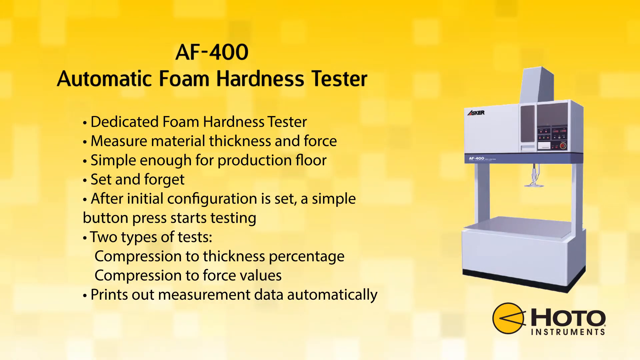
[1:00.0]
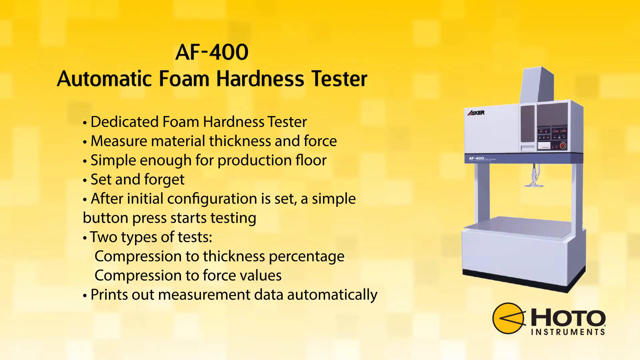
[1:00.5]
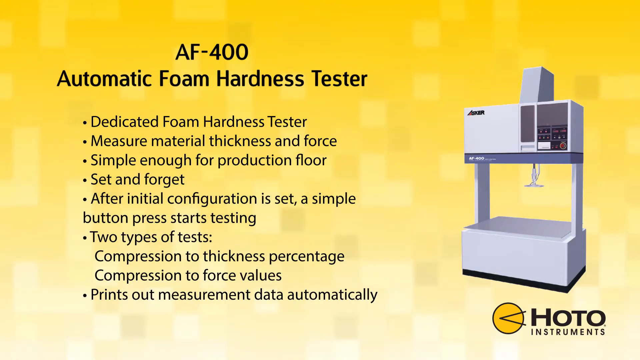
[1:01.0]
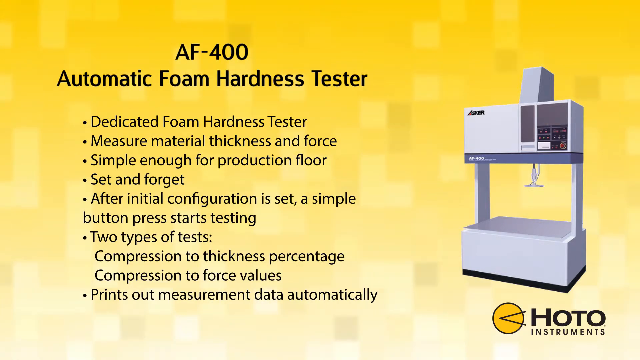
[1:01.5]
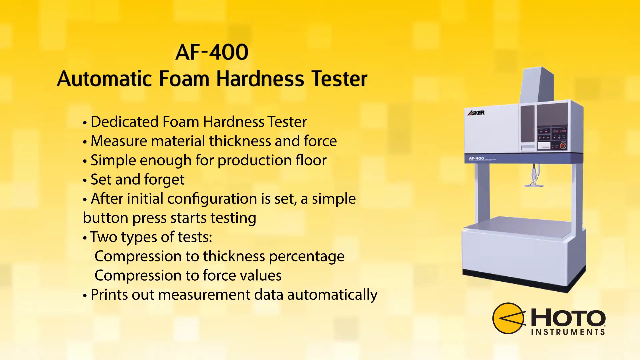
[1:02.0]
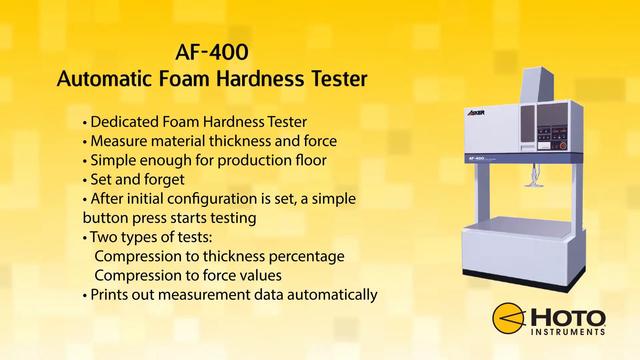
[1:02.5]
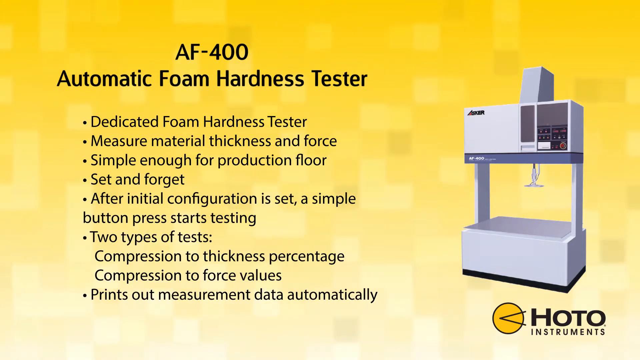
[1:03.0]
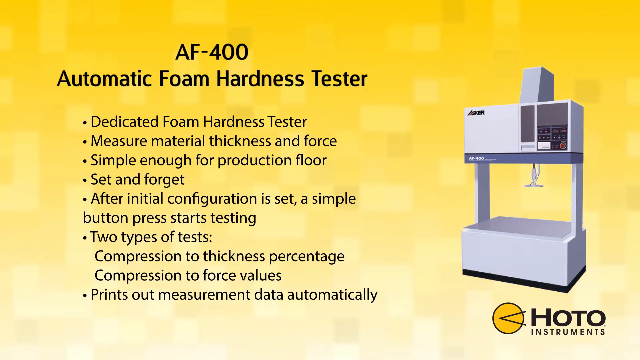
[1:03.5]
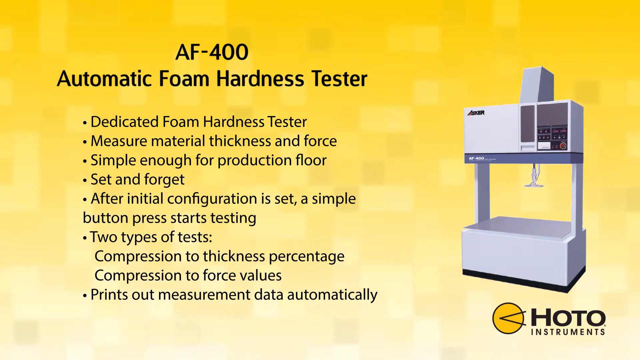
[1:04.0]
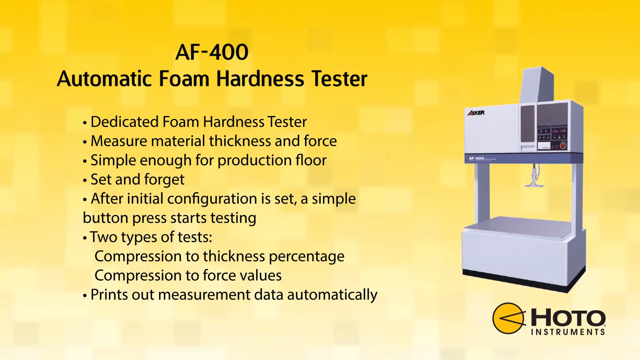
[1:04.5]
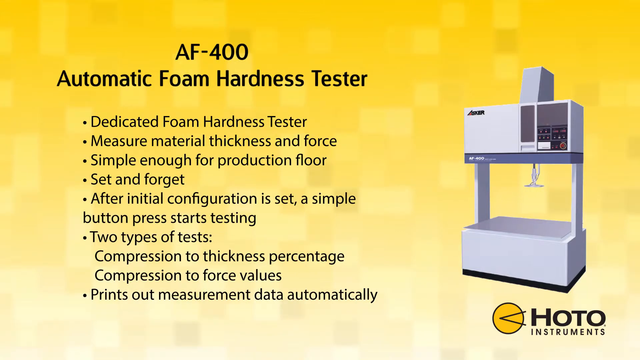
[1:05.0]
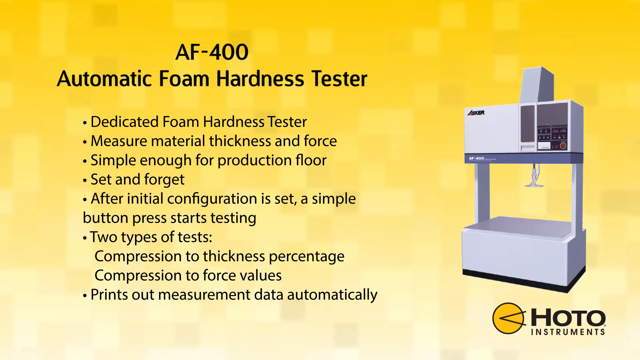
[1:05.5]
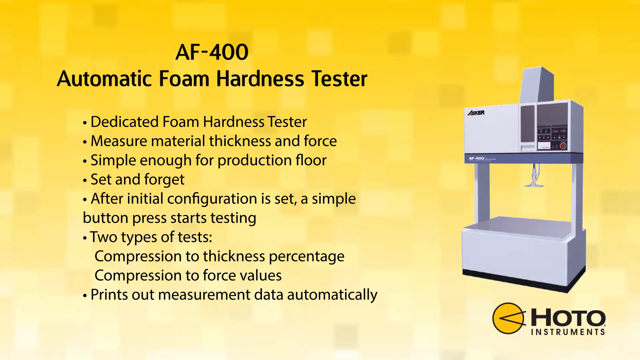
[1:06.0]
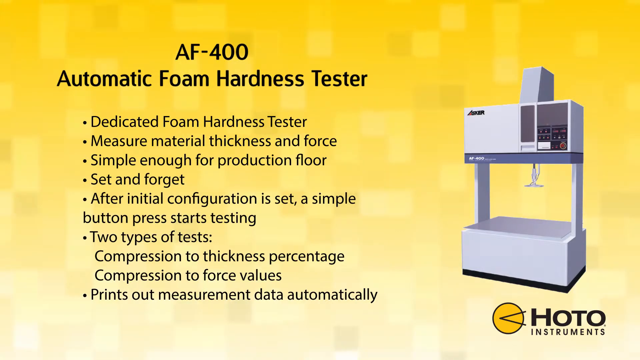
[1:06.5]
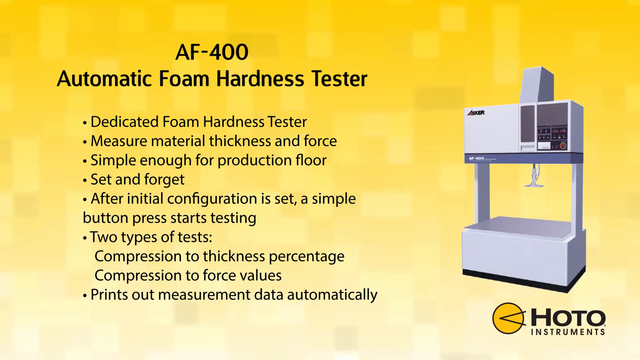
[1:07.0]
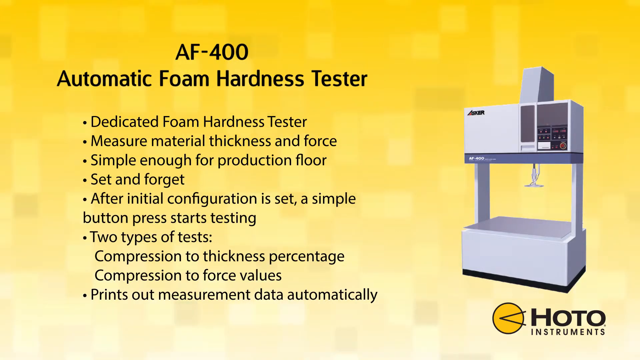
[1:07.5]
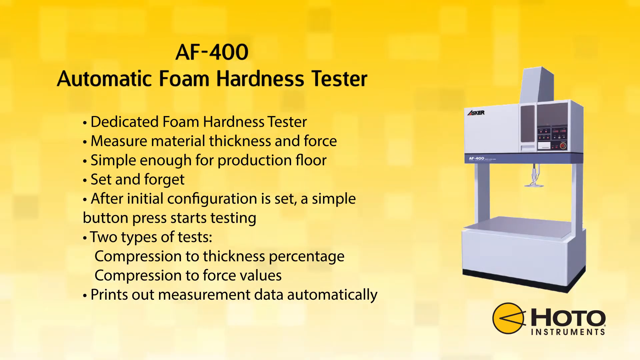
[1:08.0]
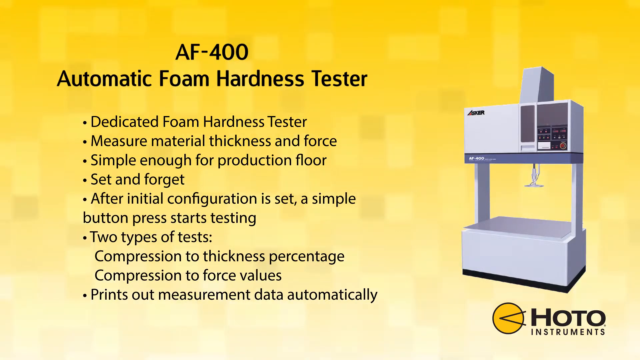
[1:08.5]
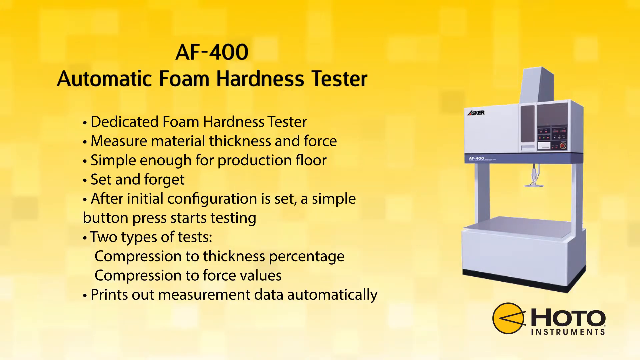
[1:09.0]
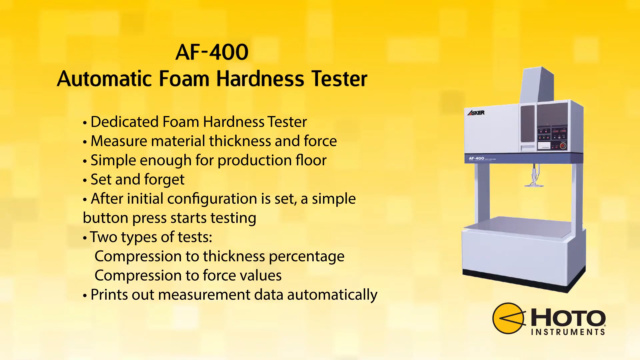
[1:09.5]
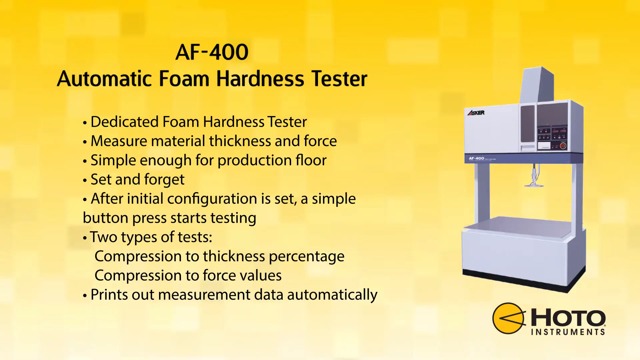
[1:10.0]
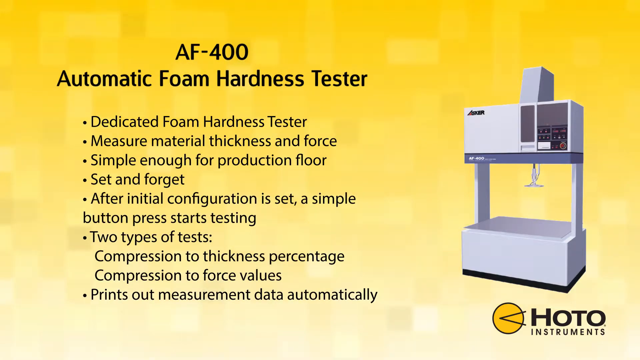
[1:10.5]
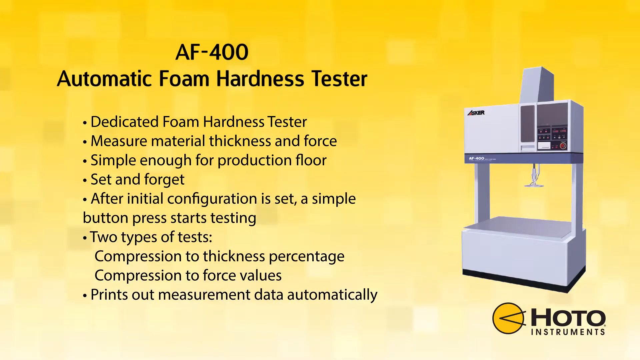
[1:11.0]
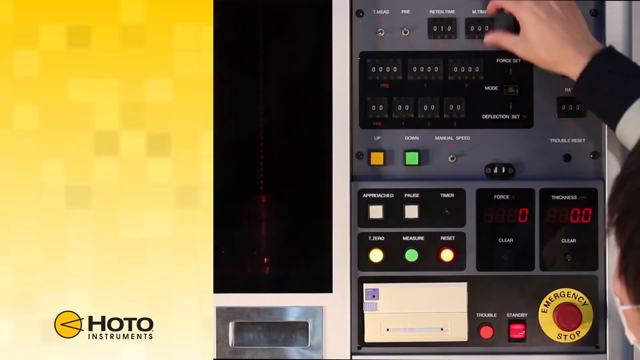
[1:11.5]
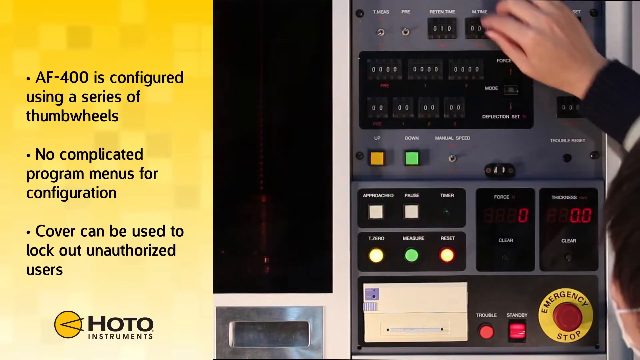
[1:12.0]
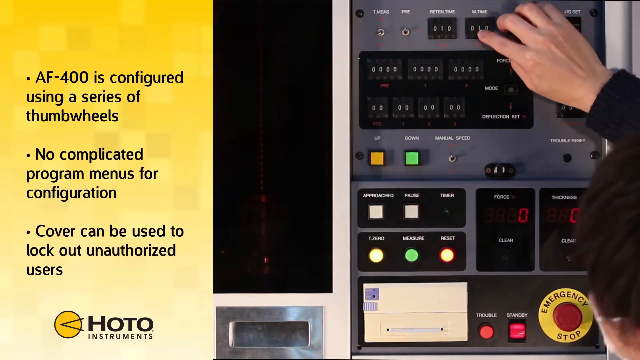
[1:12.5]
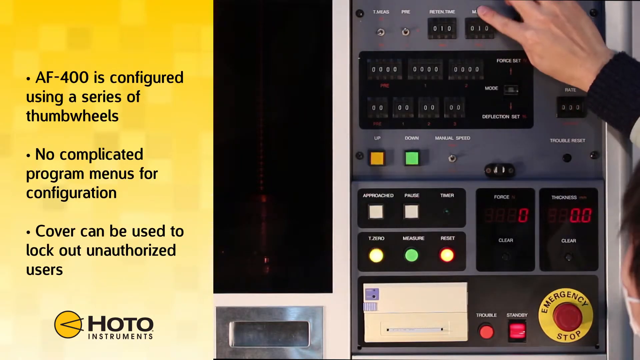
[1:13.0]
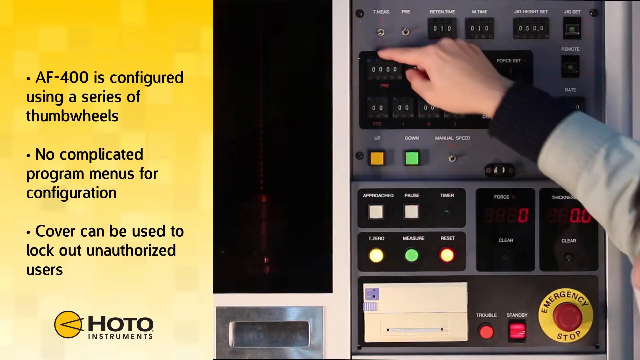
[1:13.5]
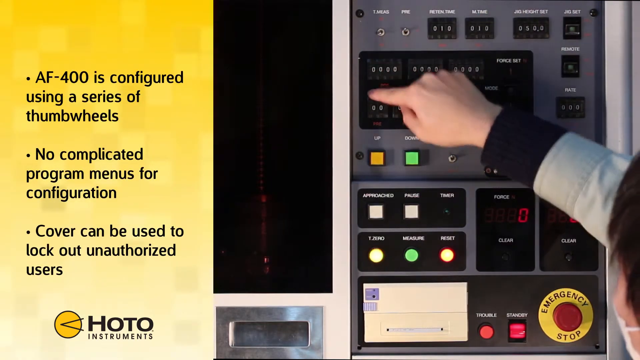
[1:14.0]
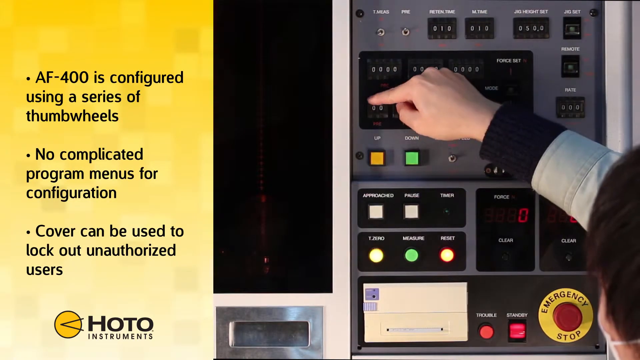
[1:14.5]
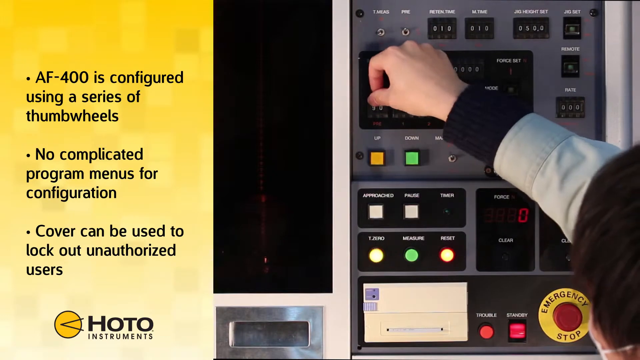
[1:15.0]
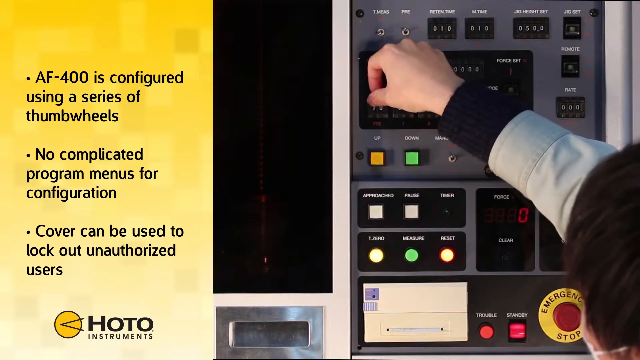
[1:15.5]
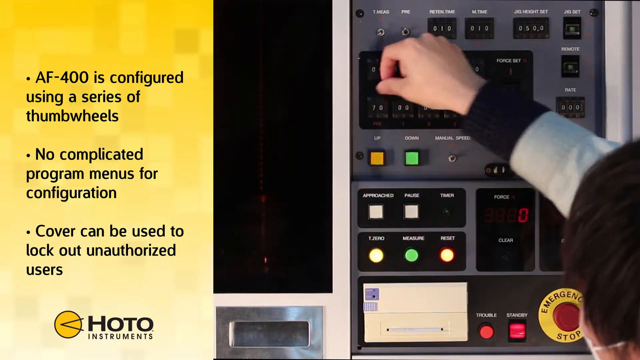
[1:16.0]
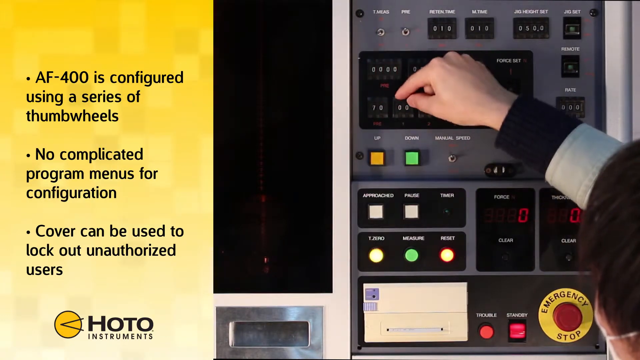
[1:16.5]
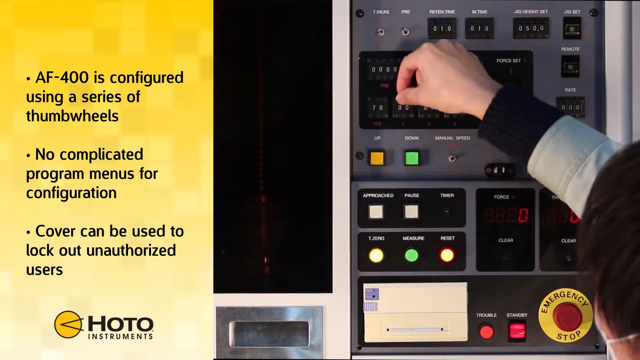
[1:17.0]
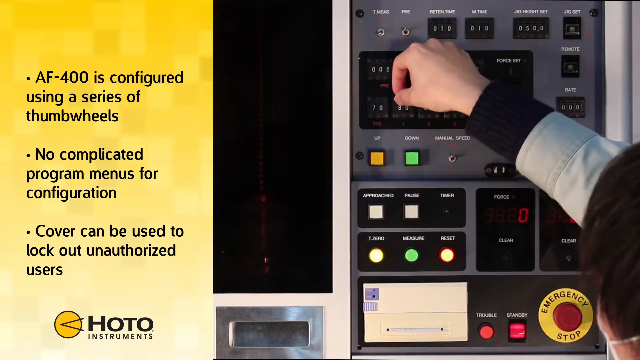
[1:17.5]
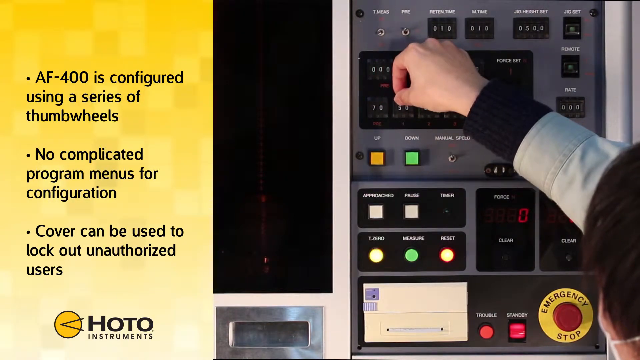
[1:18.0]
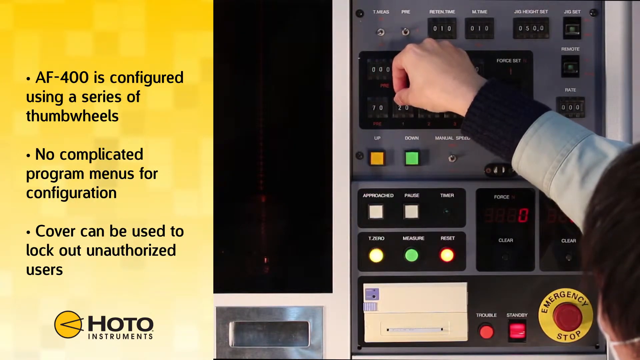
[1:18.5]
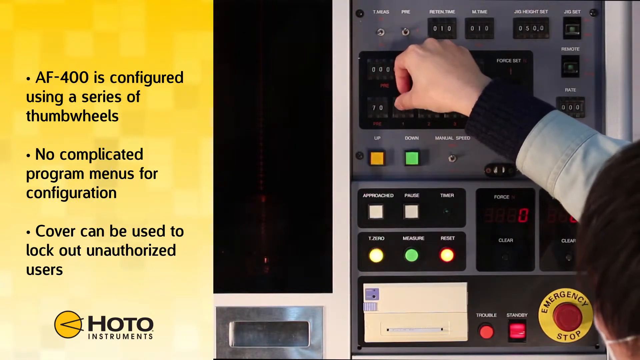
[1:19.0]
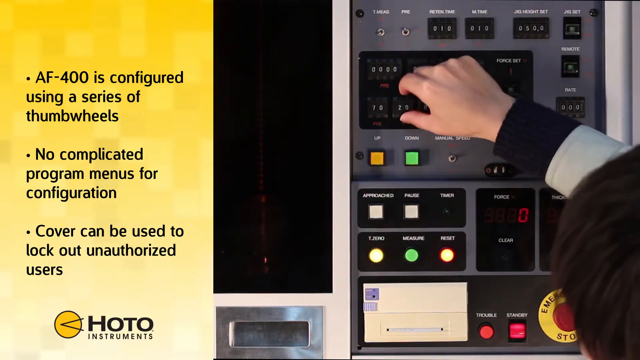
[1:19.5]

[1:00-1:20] The pixelated background continues, darker golden yellow, then lighter yellow, with a grayed-out bottom that makes the logo hard to see. The eight bullet points remain. The video then moves to the actual piece of machinery: a slide with three new bullet points, including "AF is configured using a series of thumb wheels". A picture shows what look like pretty basic buttons and lights, and a person clicks things, kind of jiggling their thumb. The video then goes back to the initial slide stating "AF 400 automatic foam hardiness".